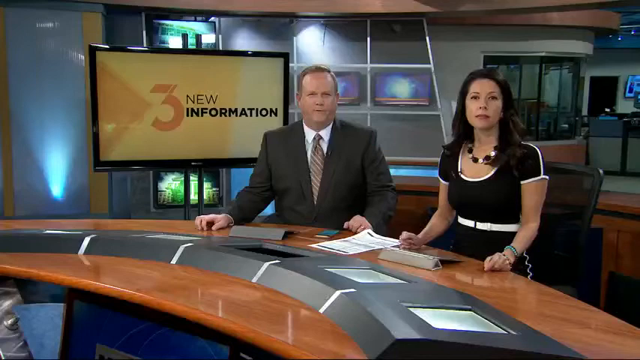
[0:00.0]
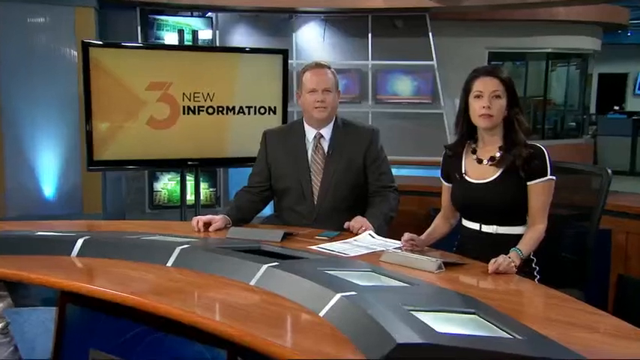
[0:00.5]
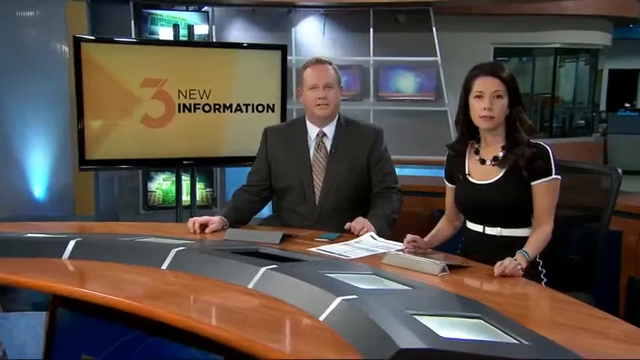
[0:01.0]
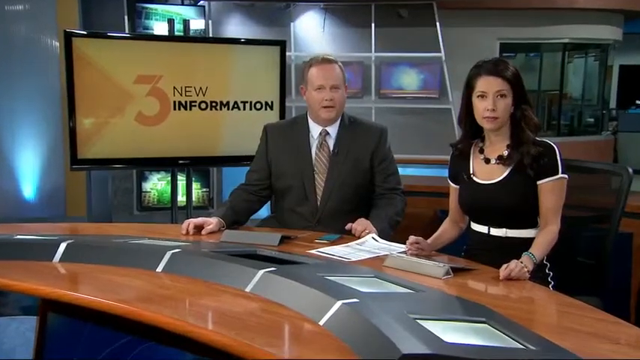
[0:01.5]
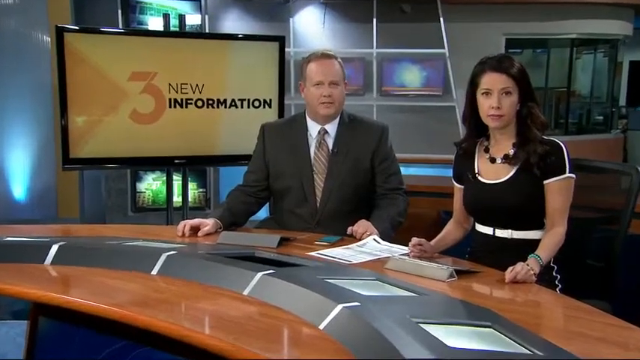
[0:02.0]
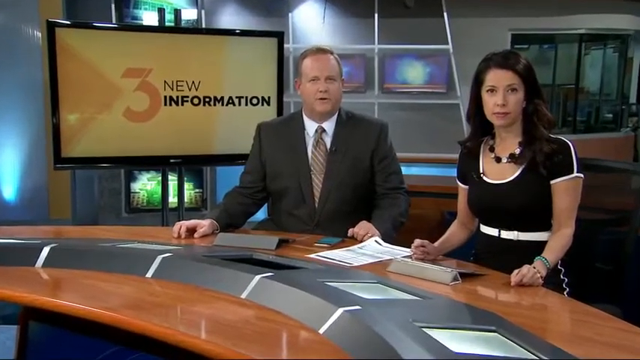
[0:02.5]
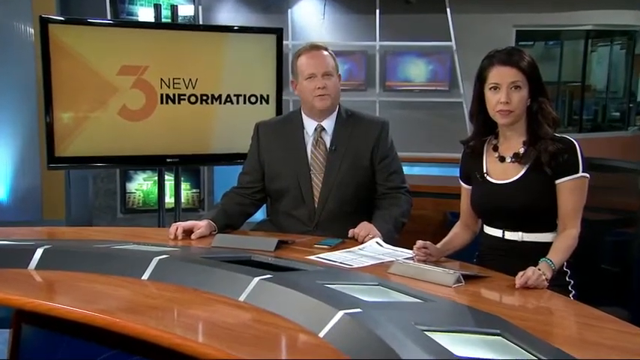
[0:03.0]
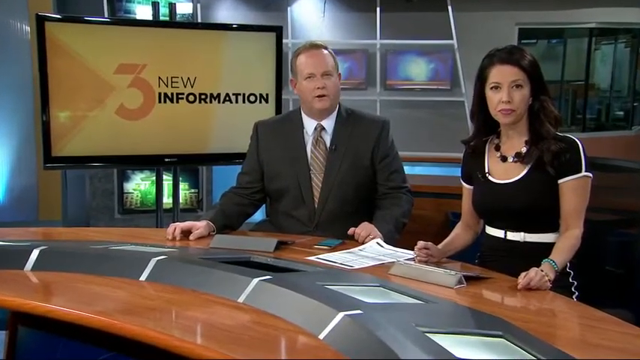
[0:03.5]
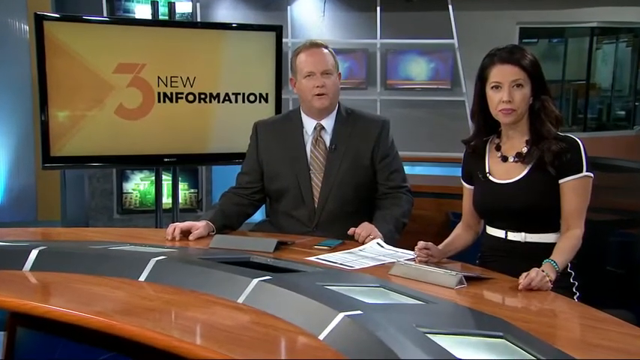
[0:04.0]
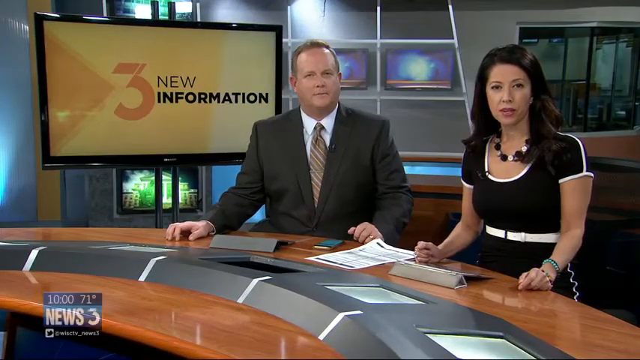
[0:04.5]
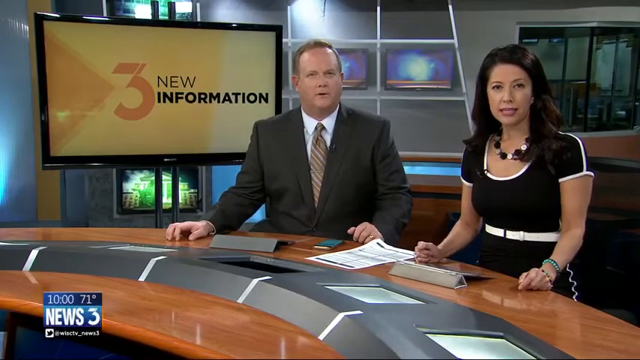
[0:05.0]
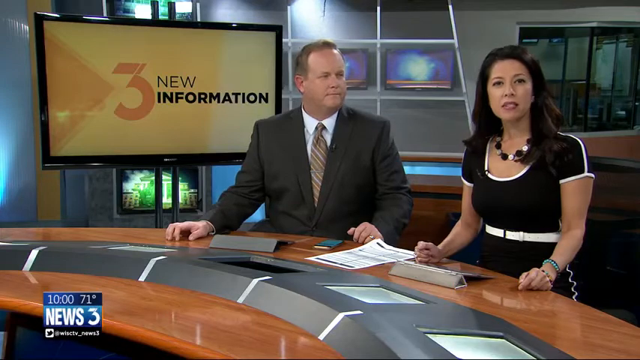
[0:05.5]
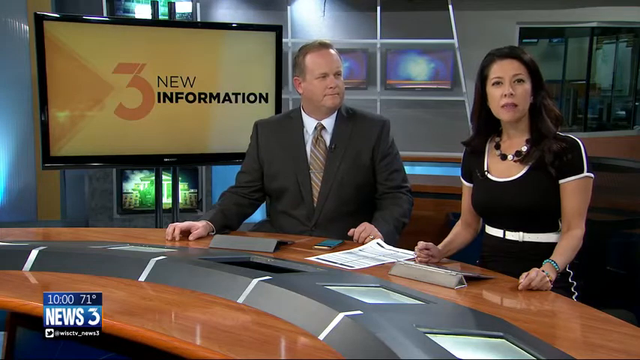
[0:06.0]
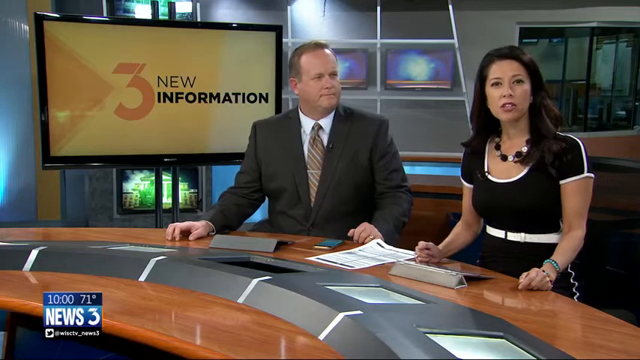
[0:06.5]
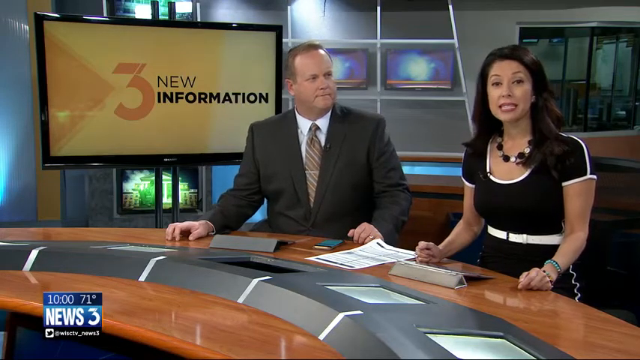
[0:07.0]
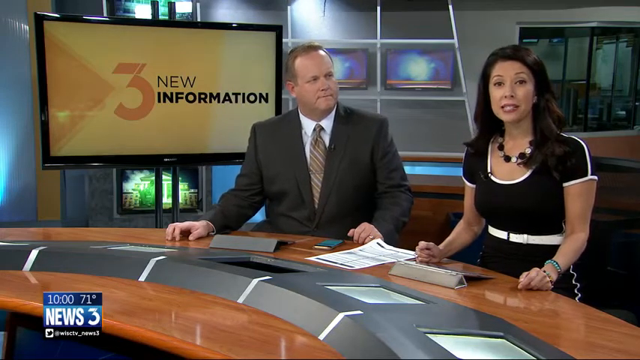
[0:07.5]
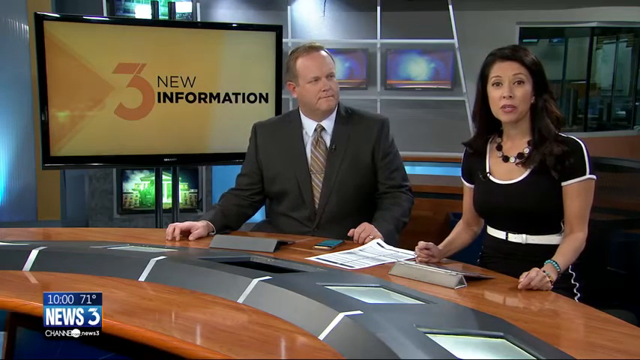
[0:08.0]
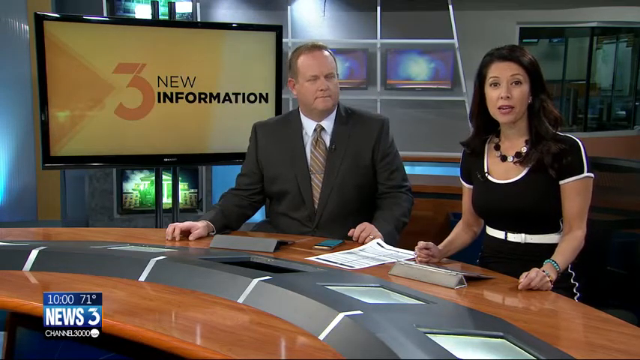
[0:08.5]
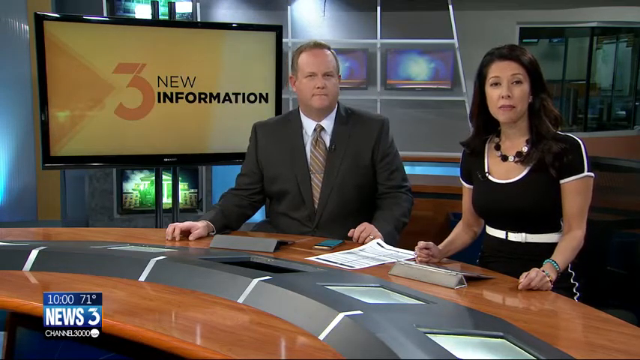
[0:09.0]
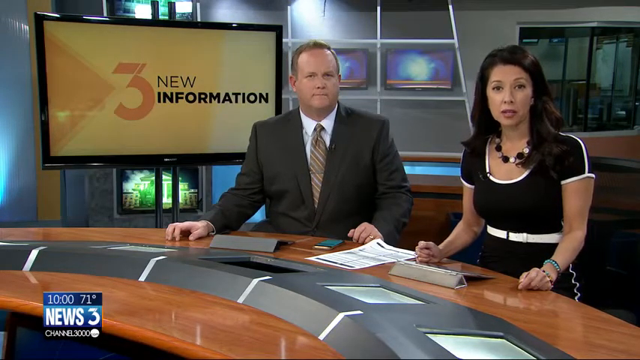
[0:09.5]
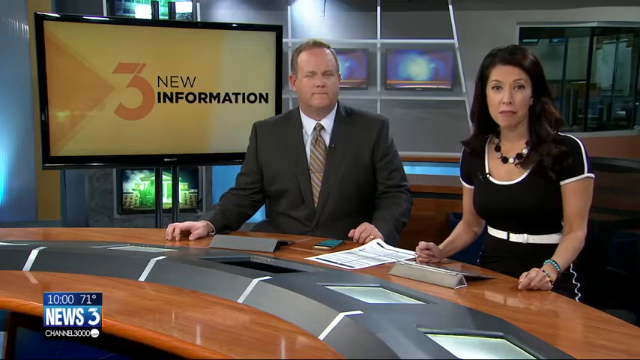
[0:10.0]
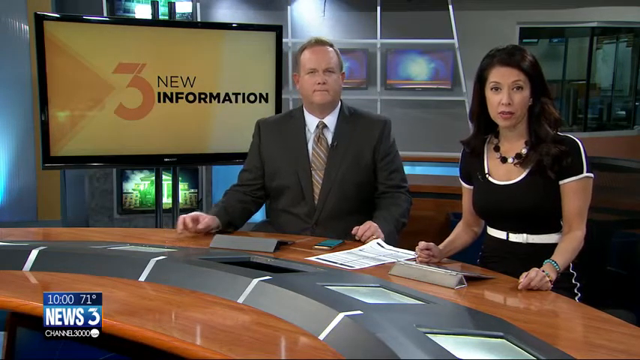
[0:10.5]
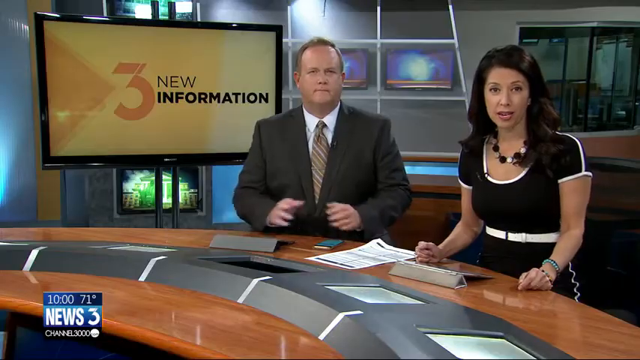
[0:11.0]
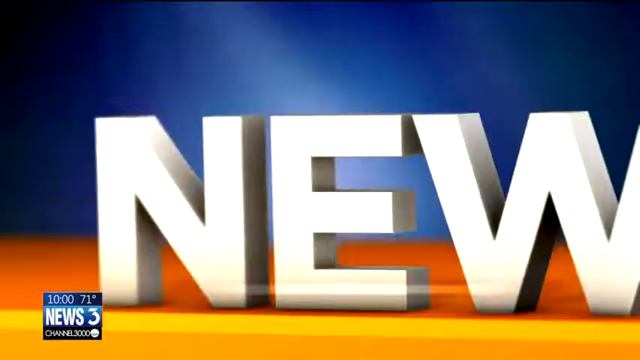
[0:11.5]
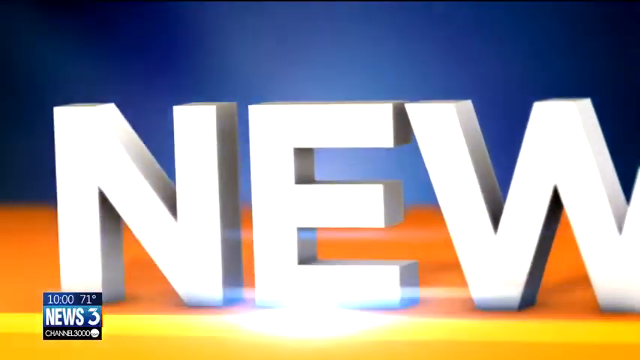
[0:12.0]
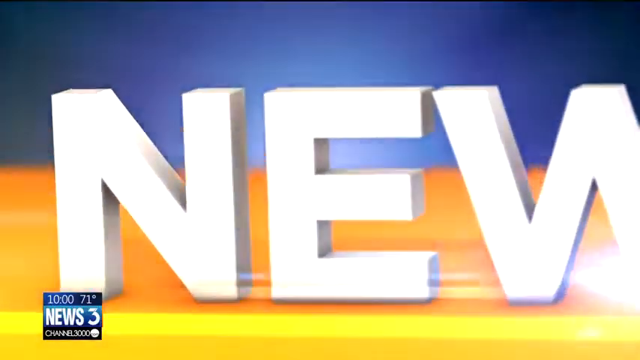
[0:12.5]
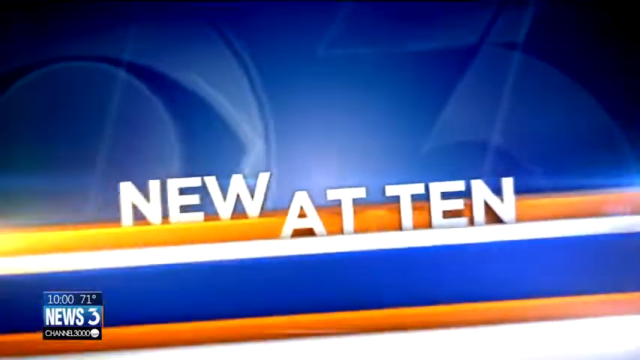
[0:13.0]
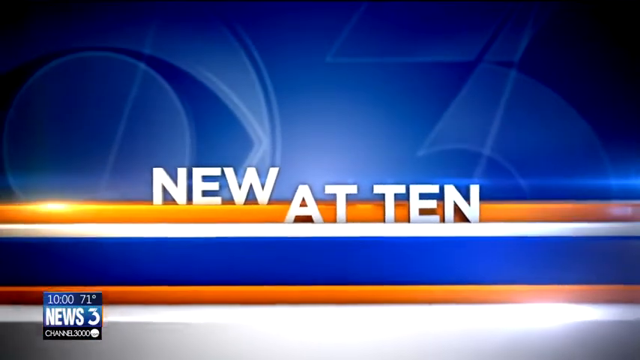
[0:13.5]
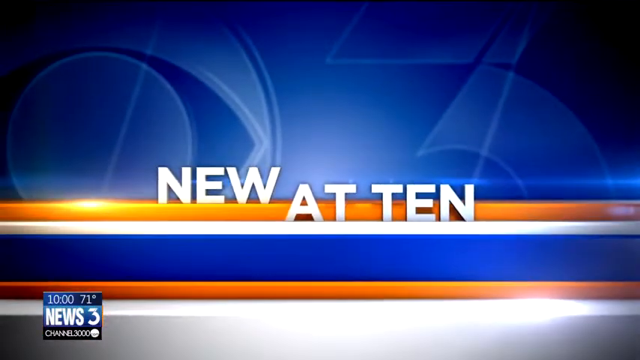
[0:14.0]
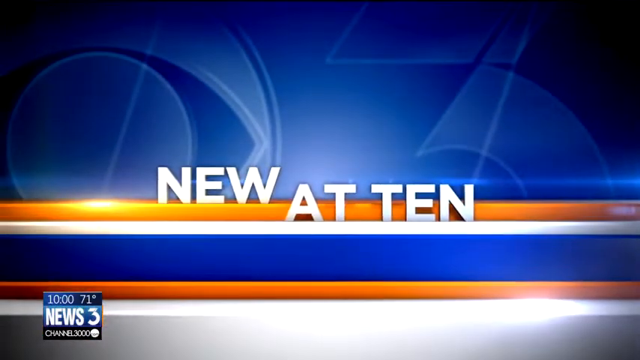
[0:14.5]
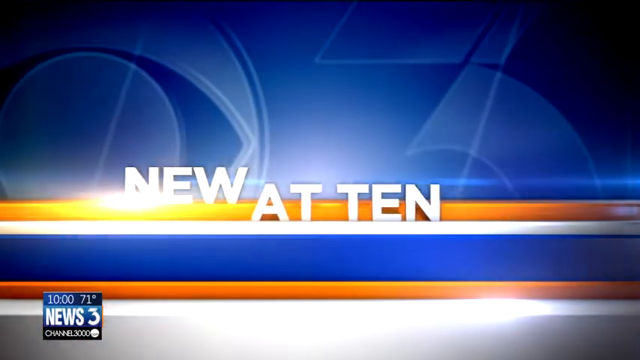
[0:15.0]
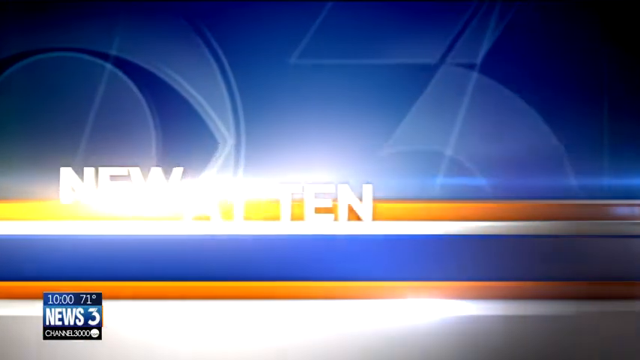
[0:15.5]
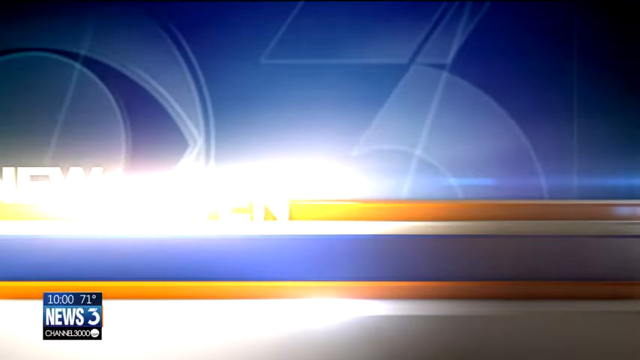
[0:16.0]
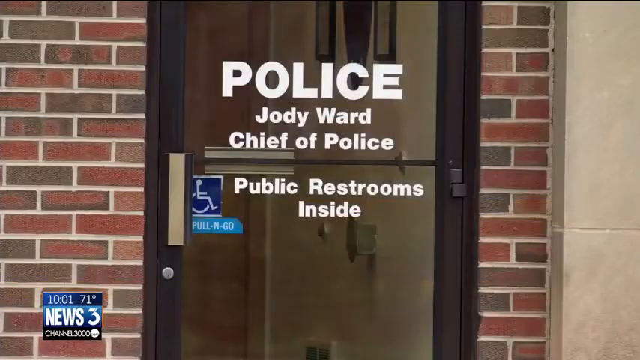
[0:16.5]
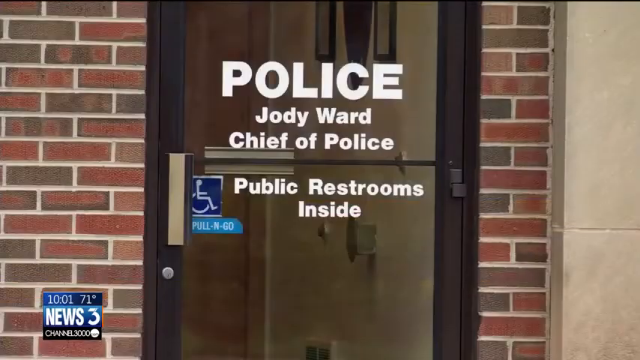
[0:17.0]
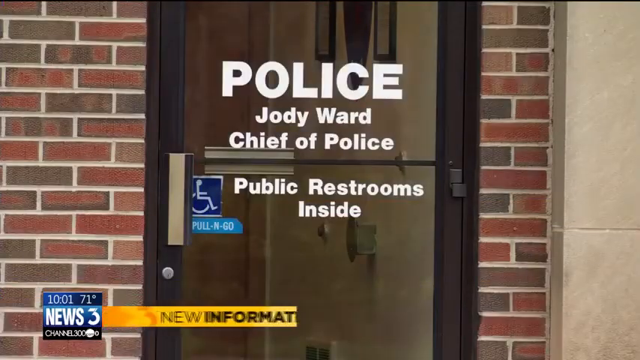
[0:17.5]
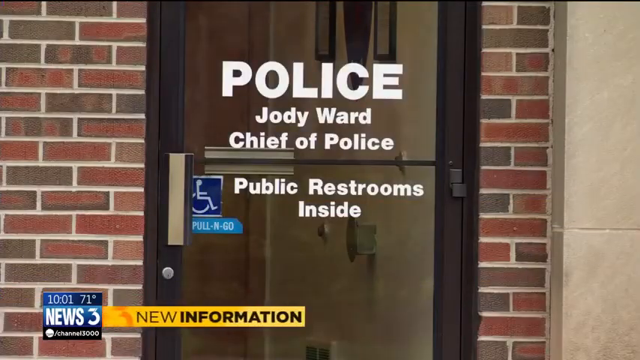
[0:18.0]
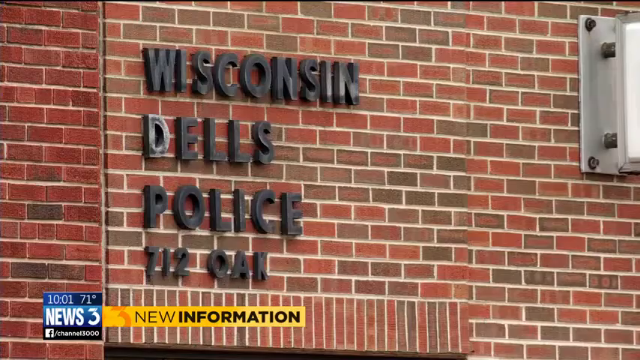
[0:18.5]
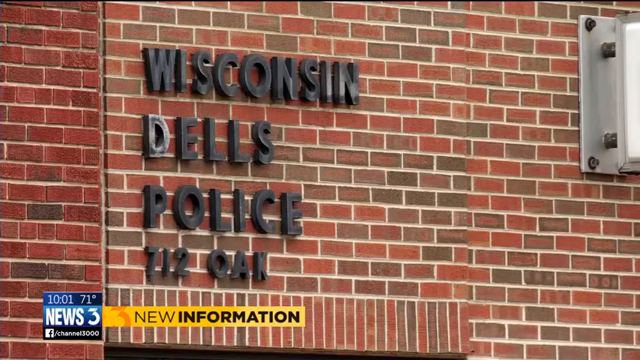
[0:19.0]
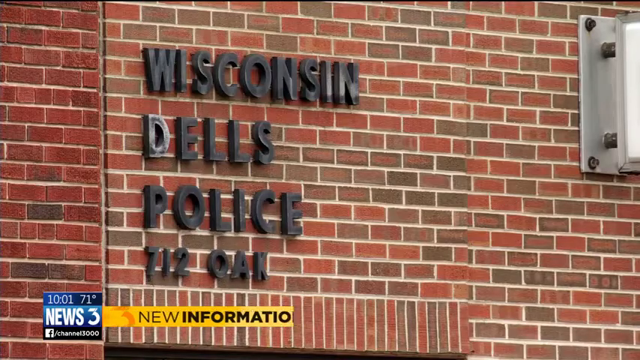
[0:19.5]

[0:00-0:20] A news station video opens in a newsroom where a woman and a man are seated at a table. She wears a black dress, and he wears what looks like a gray suit. They have papers and small iPads in front of them, and only the two of them appear in the shot. The newsroom looks large, with a lot of space. They are sitting on black chairs and have microphones attached to their collars and blazers. On-screen text reads "channel three news" and "New at 10," followed by "Police," "Jody Ward," "chief of police," "public restrooms inside" and "Wisconsin Dales police."